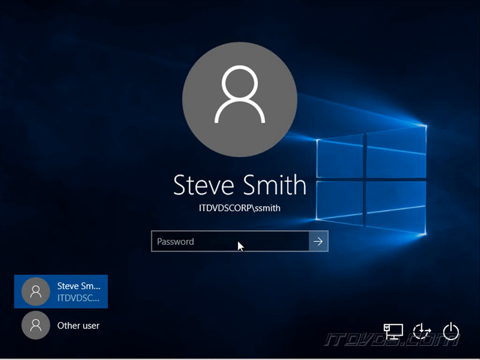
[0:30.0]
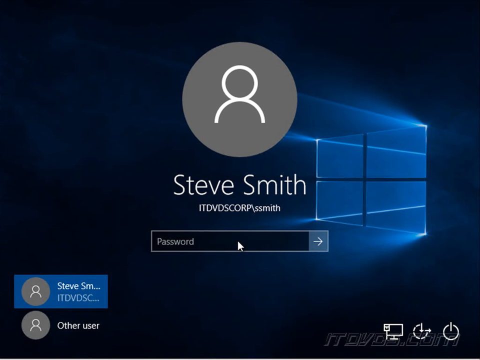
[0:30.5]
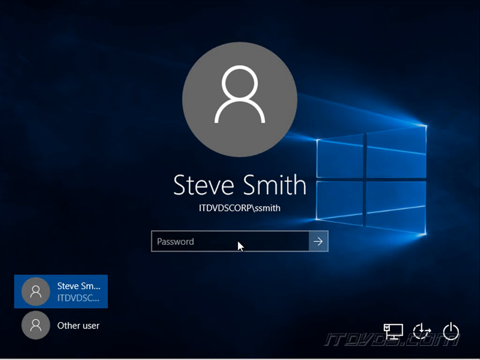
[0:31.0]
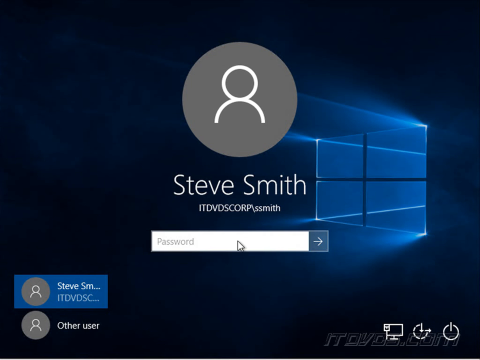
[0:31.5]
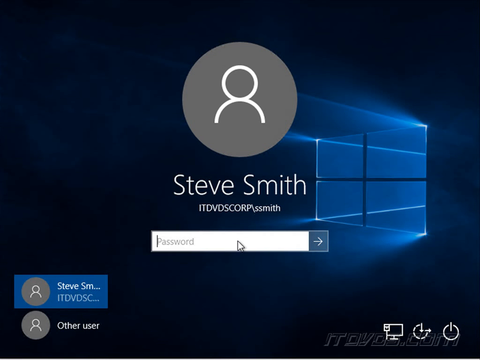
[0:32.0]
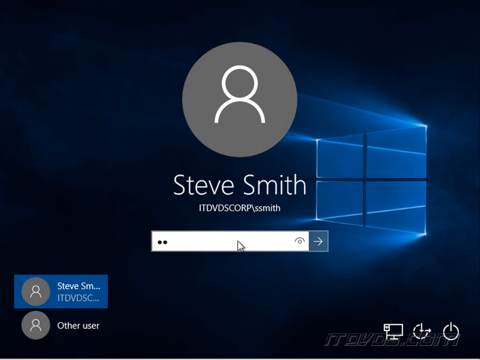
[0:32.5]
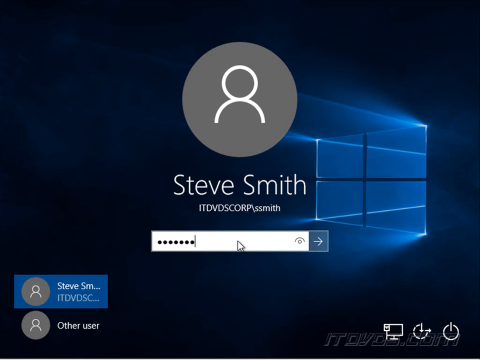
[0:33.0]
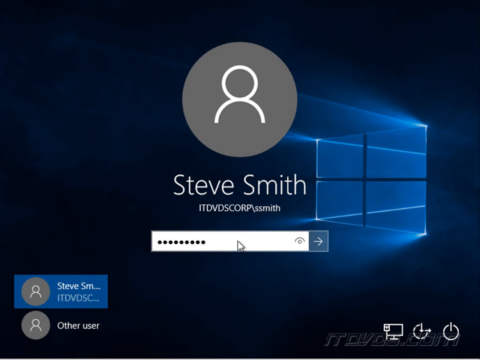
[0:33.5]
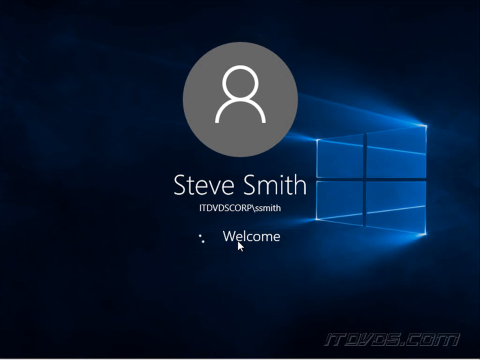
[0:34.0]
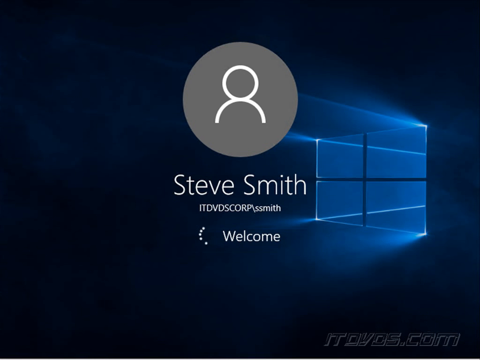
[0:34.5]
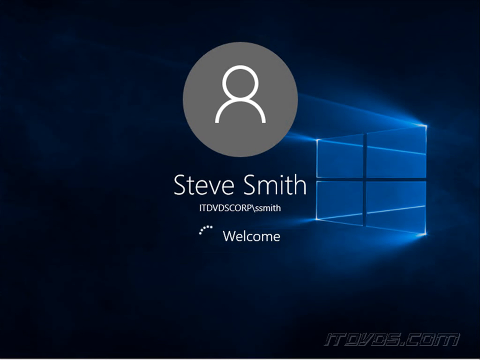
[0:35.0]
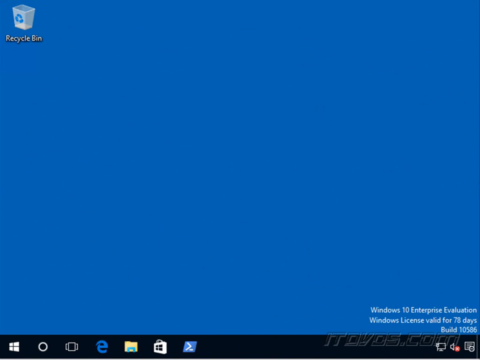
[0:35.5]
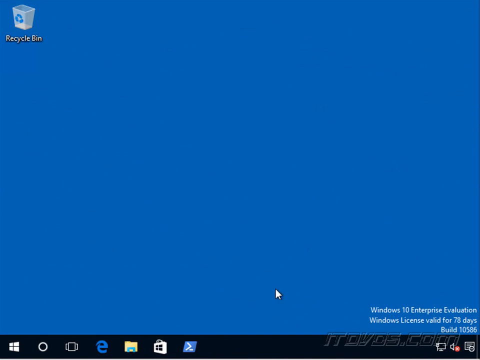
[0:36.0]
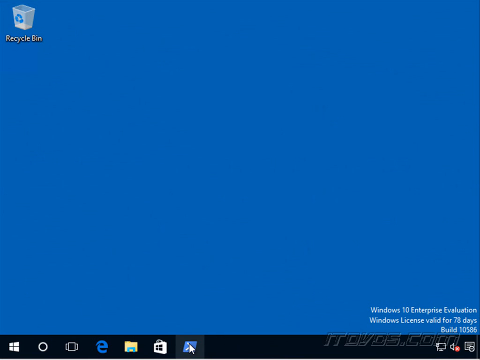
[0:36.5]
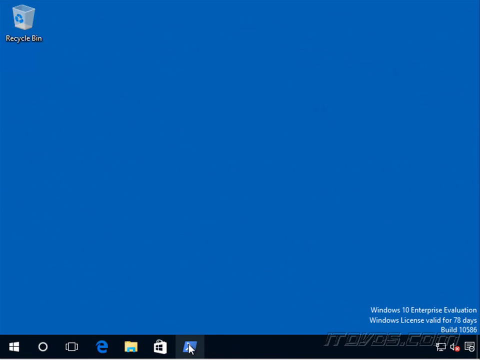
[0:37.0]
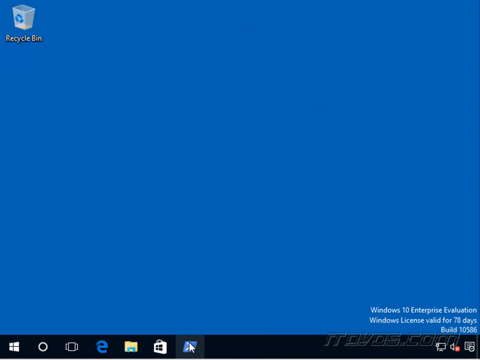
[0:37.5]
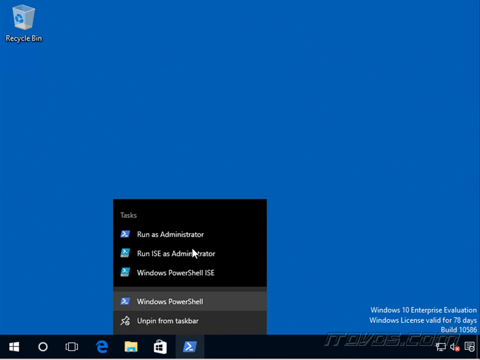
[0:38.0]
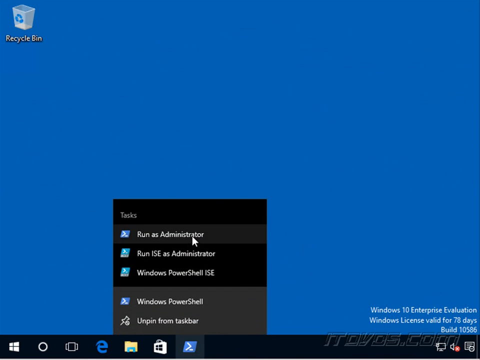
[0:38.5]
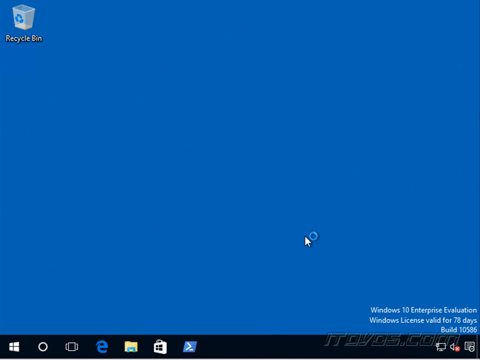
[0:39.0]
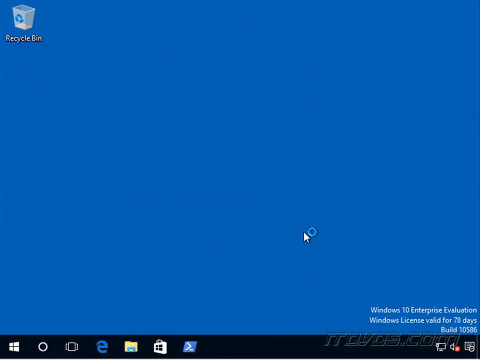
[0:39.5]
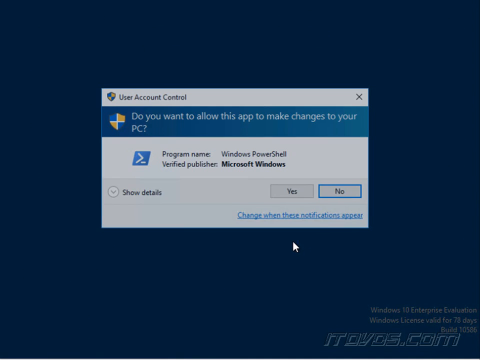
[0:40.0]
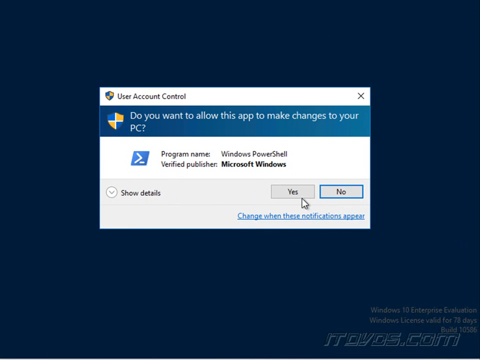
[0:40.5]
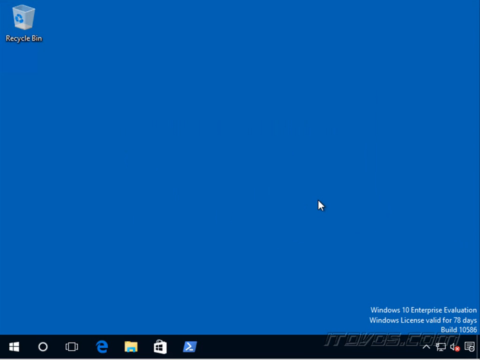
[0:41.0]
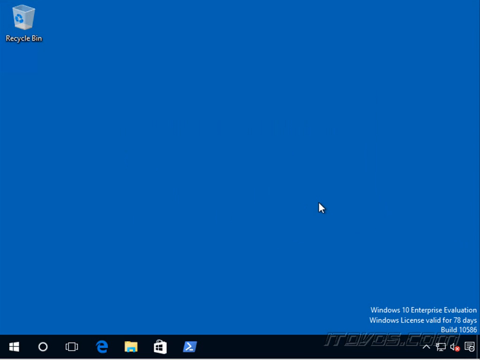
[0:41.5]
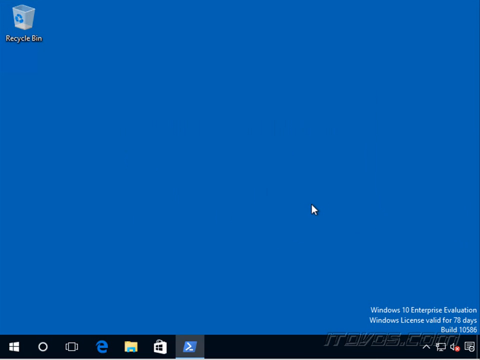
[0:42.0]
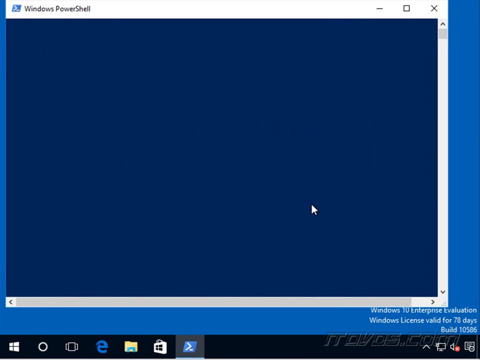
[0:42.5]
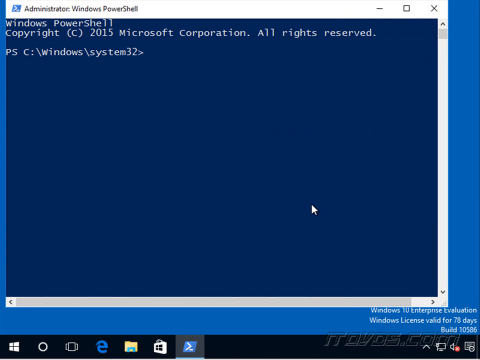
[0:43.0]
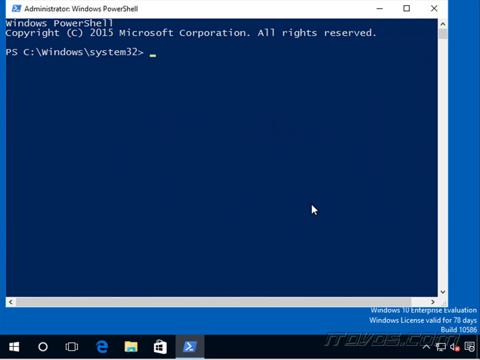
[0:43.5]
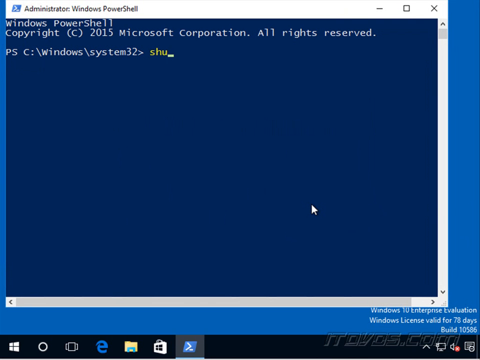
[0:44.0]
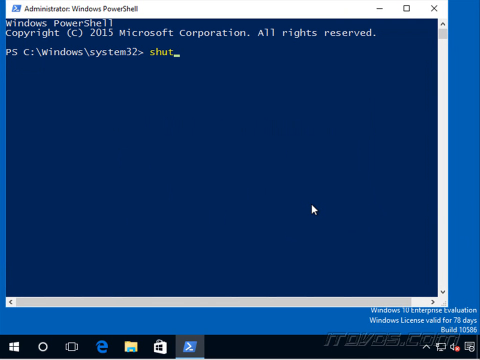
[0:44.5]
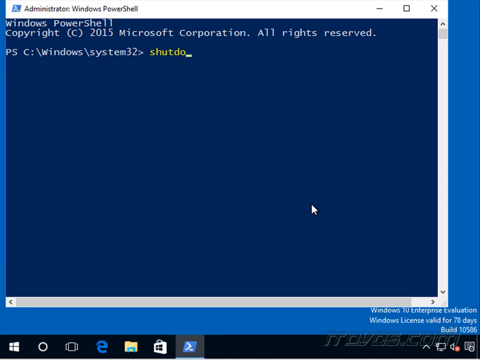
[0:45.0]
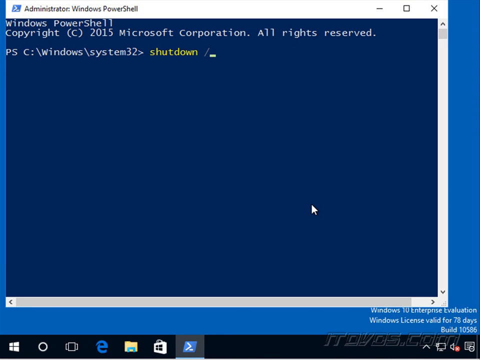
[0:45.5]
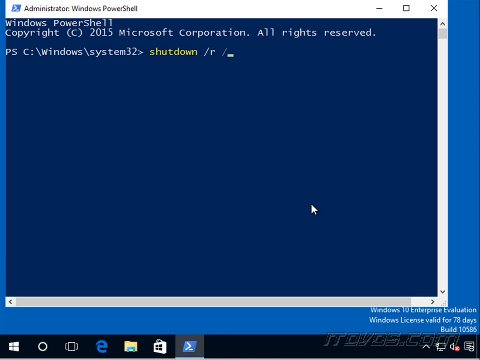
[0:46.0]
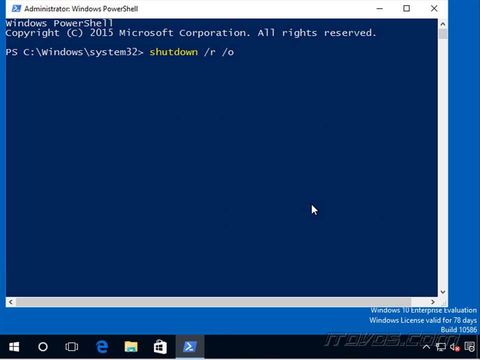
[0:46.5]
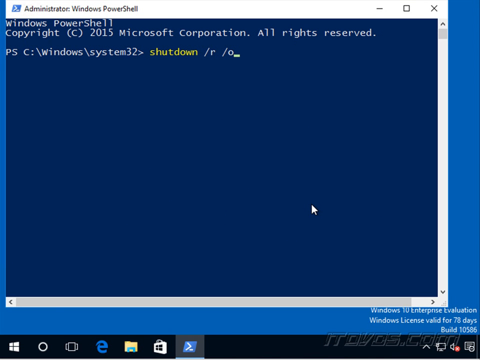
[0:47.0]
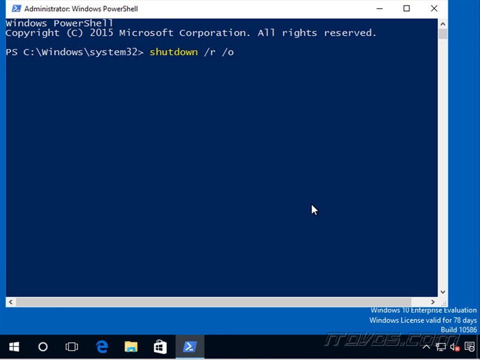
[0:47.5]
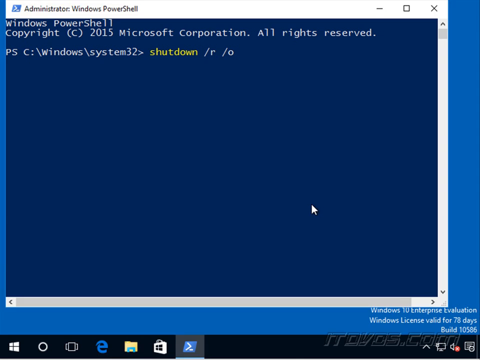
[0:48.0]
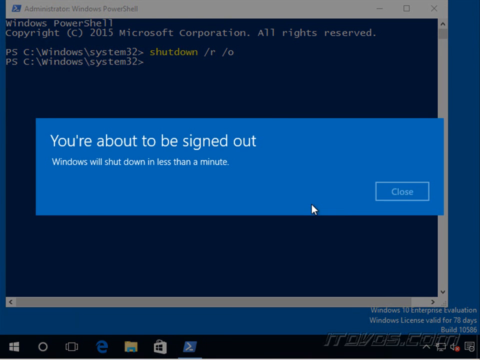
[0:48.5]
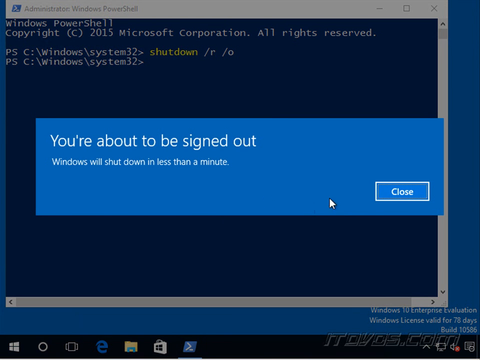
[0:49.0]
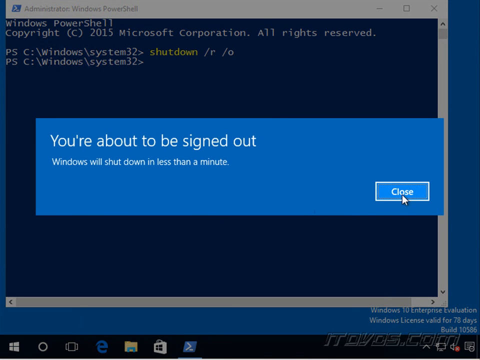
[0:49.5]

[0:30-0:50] Steve Smith enters his password. The Recycle Bin is on the desktop, and Steve Smith is the administrator of the computer. The screen is very bright. The computer's system dates from around 2015, and the laptop is protected by a password. The mouse is being used.